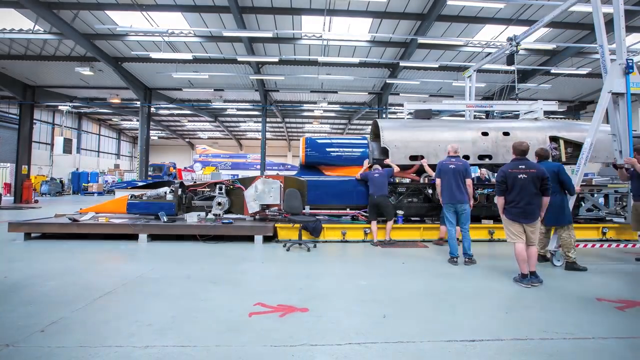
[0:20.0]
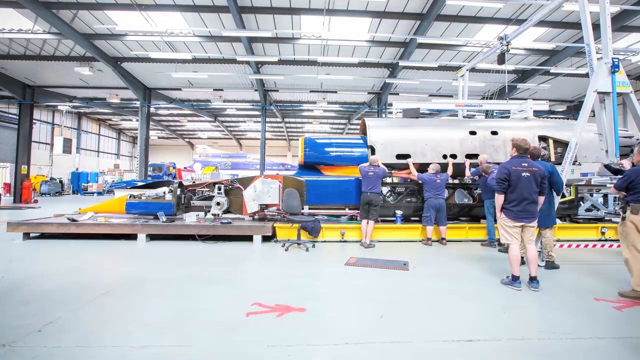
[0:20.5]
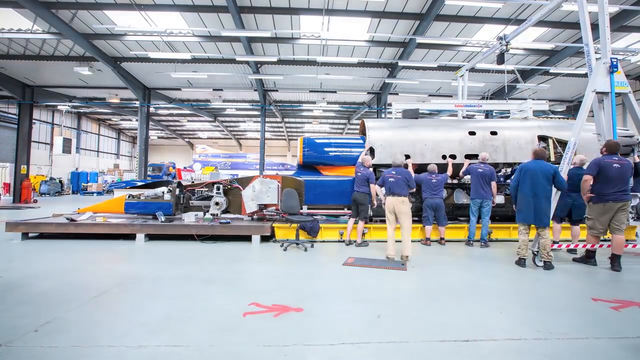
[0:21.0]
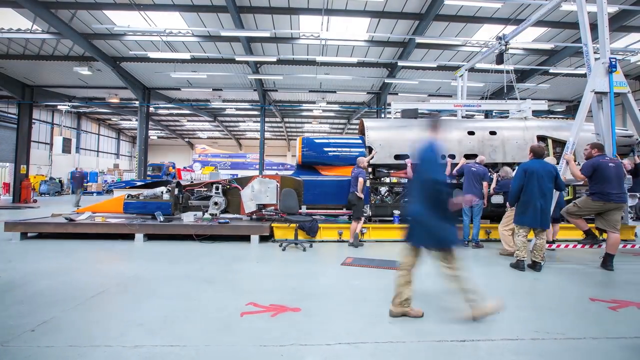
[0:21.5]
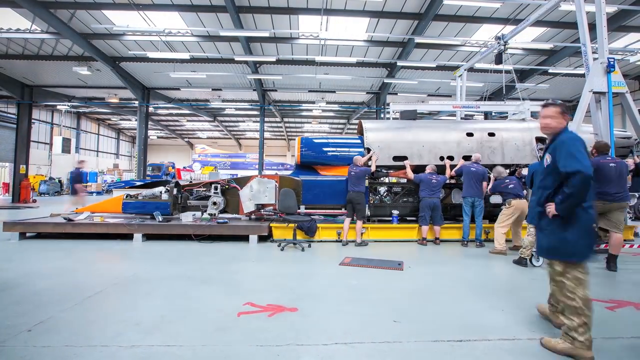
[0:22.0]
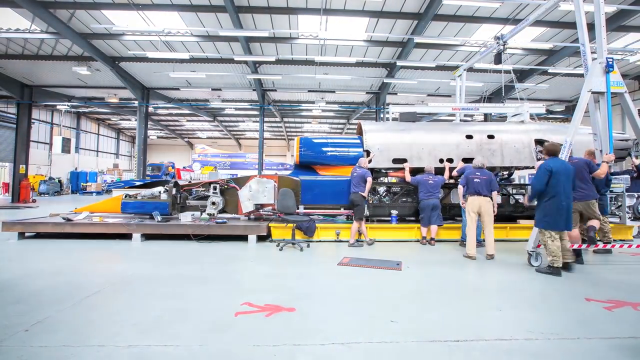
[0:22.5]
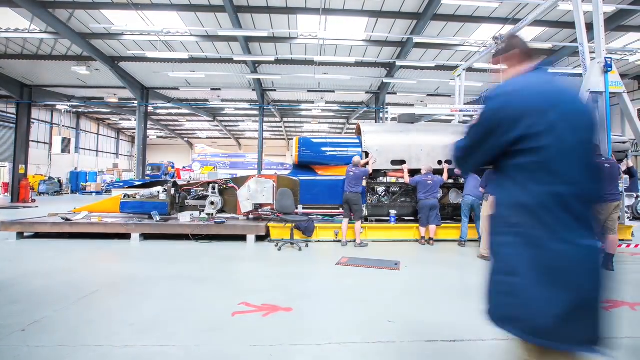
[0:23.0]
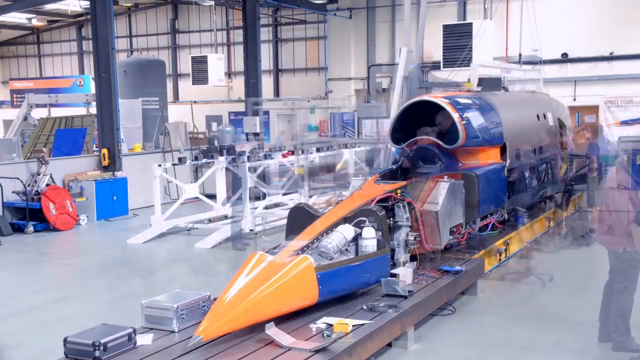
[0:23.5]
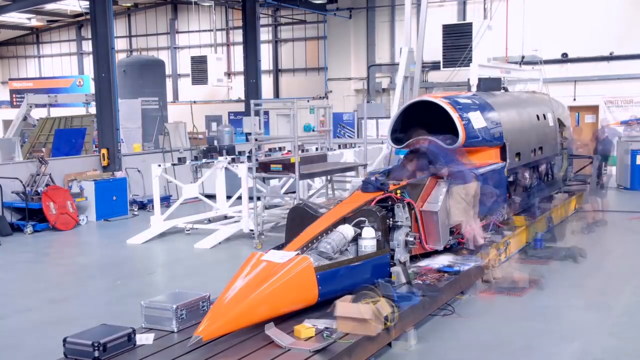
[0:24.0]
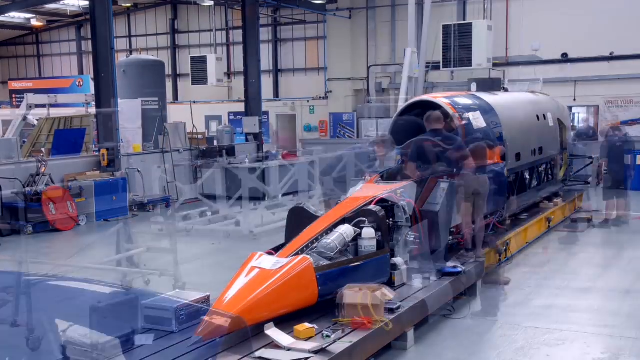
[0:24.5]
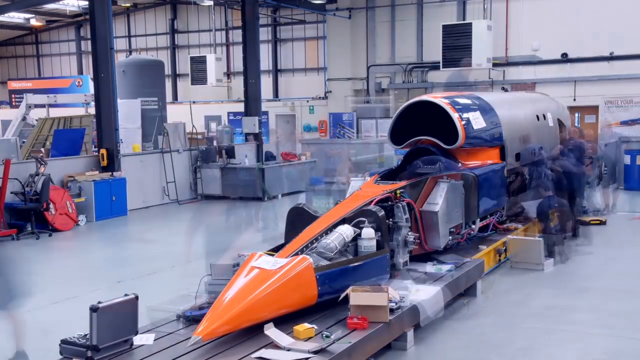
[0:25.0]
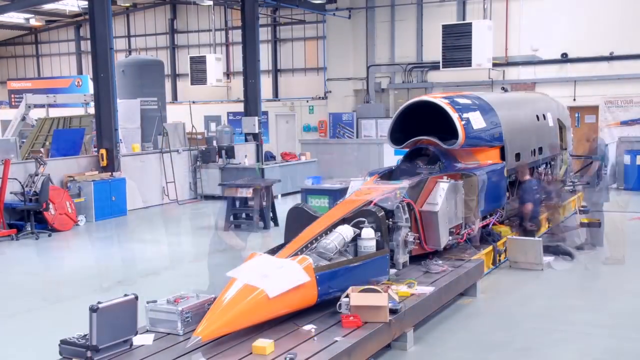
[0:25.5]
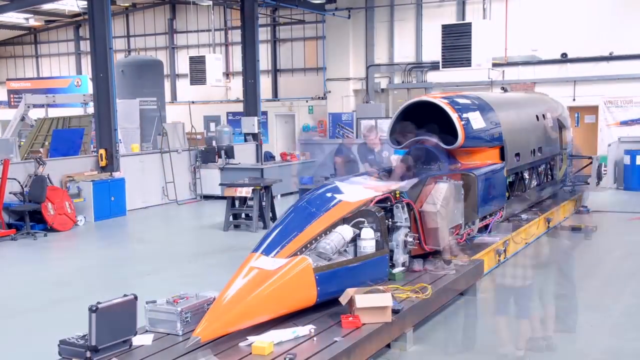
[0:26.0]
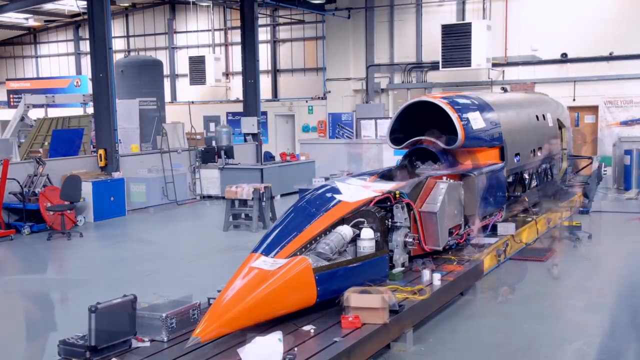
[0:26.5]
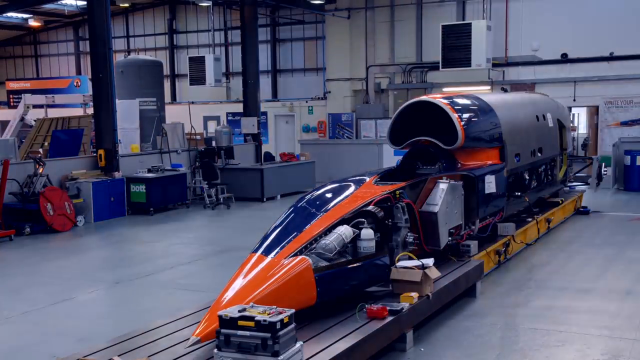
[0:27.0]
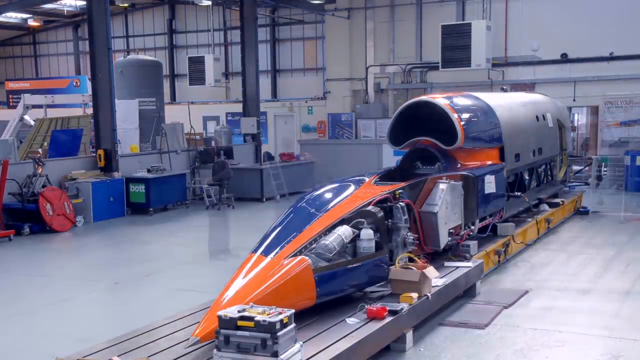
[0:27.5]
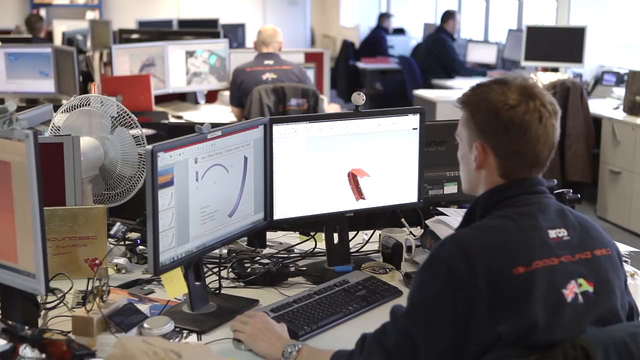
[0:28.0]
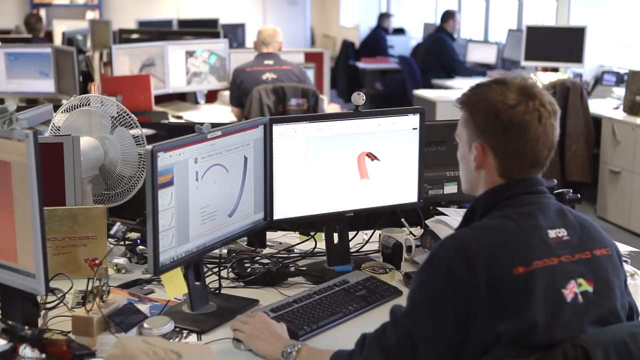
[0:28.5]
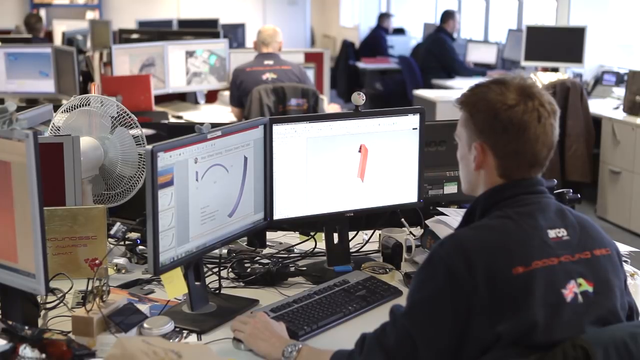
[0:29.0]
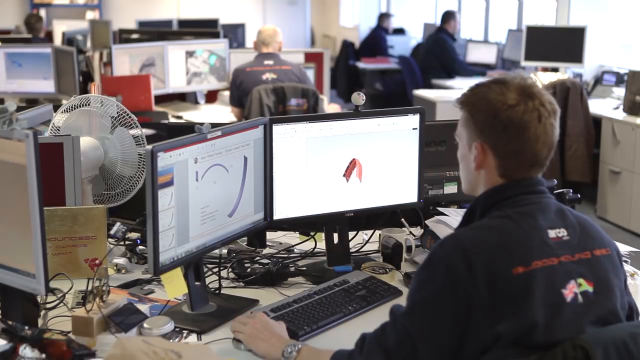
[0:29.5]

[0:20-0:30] Inside a hangar or warehouse, several men in blue polo-style uniform shirts and either cargo shorts or khaki pants assemble an object that looks like it will become a drag-racing, plane-like vehicle. The scene cuts to a man at a computer where a 3D diagram of the vehicle rotates on screen, then returns to the men assembling. The footage is heavily sped up, showing the vehicle being completed over time. The man at the computer, who has dual monitors, then looks at a different 3D model, perhaps of just one part: an orange curved piece. He wears the same type of shirt with the same type of logo as the others. The video keeps cutting back and forth between the man at the computer and the people assembling.